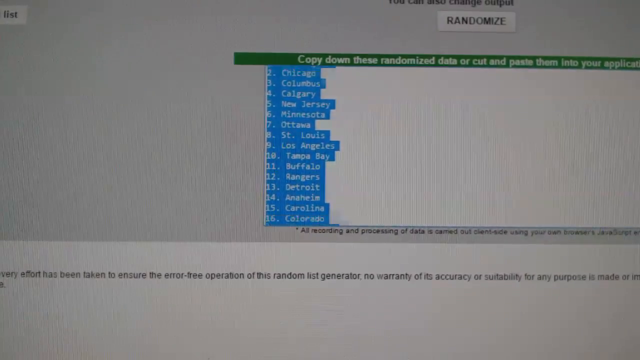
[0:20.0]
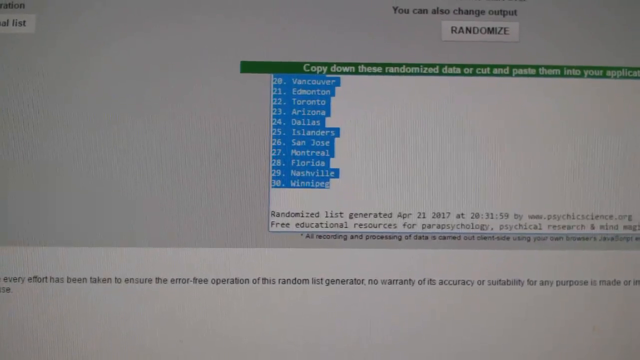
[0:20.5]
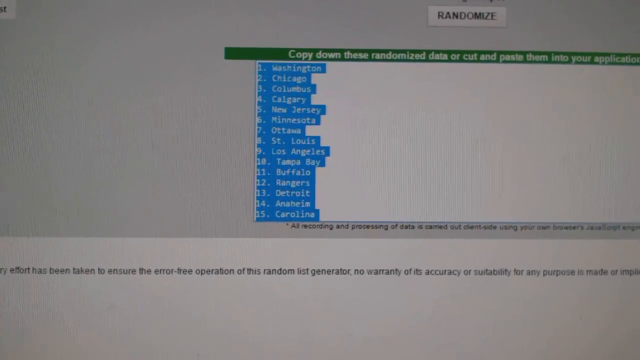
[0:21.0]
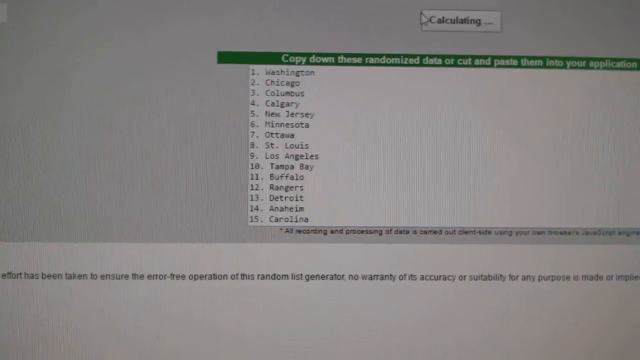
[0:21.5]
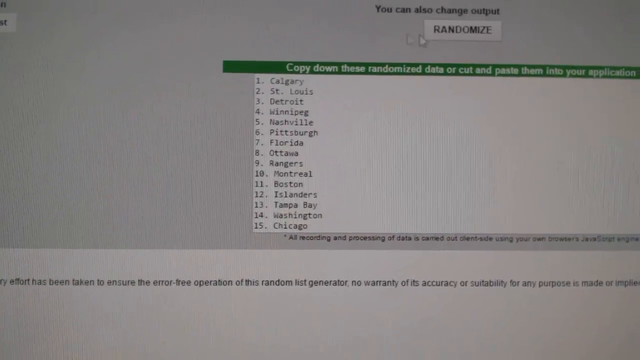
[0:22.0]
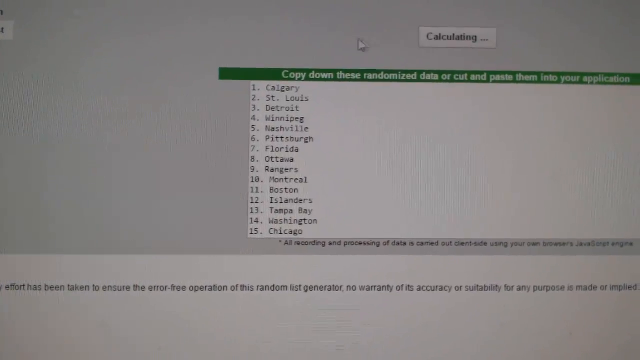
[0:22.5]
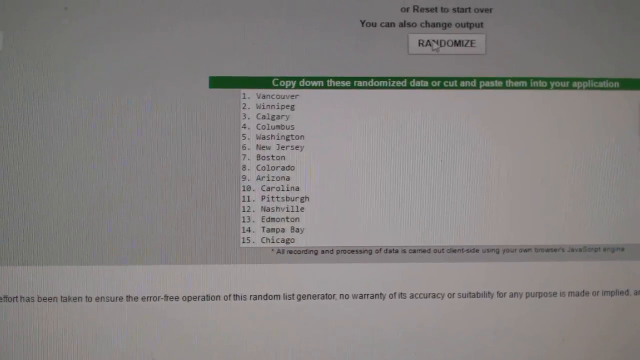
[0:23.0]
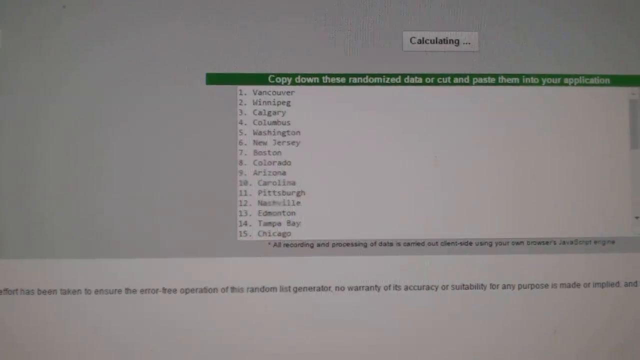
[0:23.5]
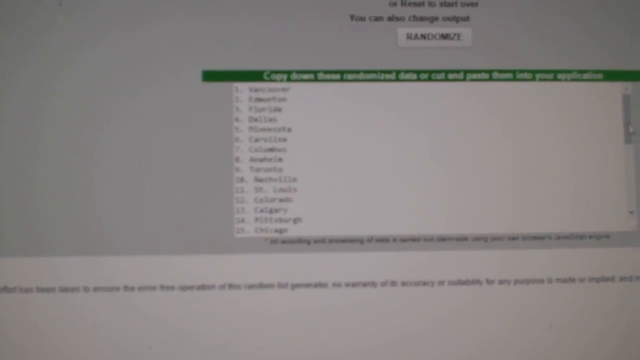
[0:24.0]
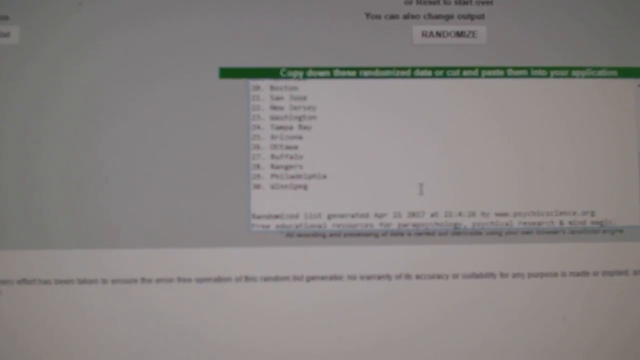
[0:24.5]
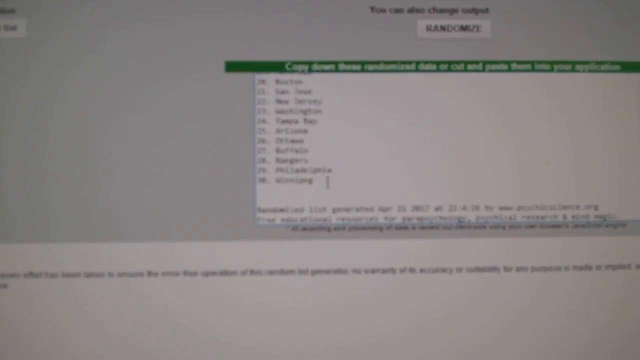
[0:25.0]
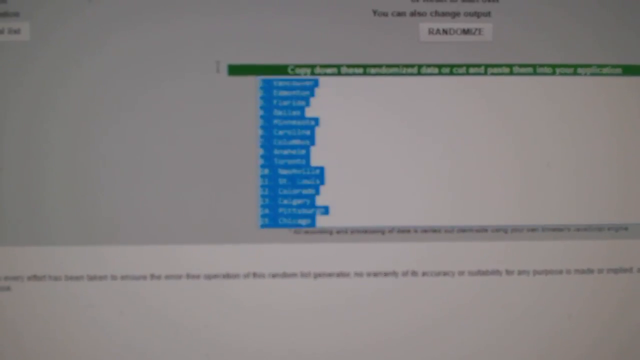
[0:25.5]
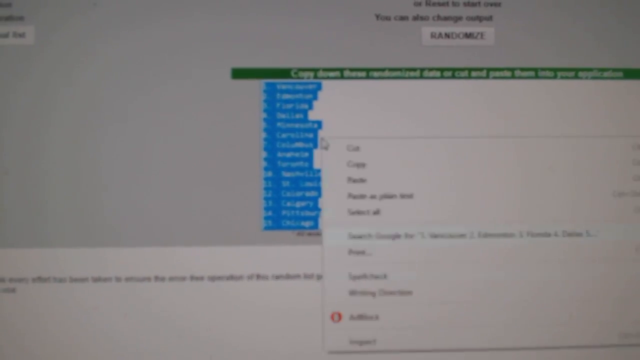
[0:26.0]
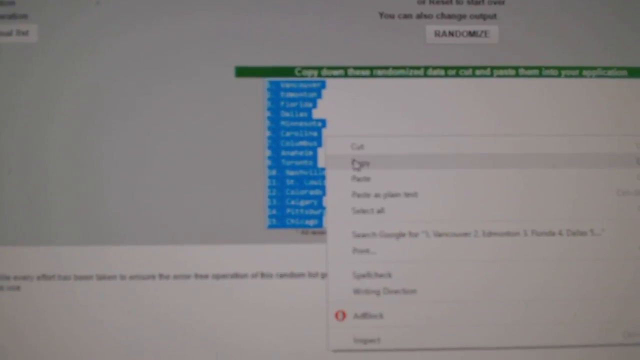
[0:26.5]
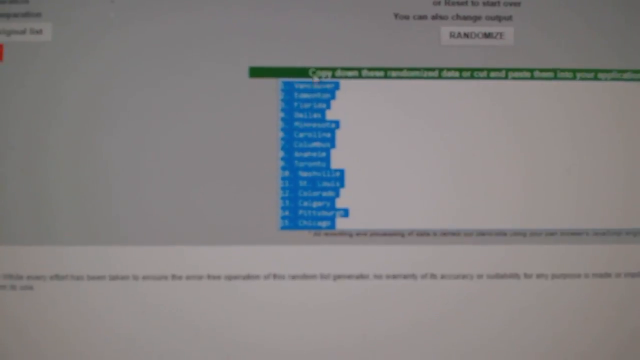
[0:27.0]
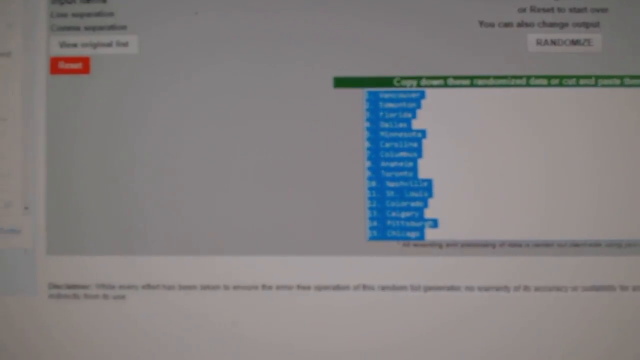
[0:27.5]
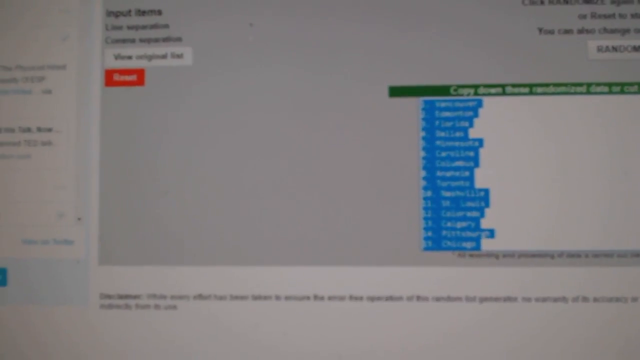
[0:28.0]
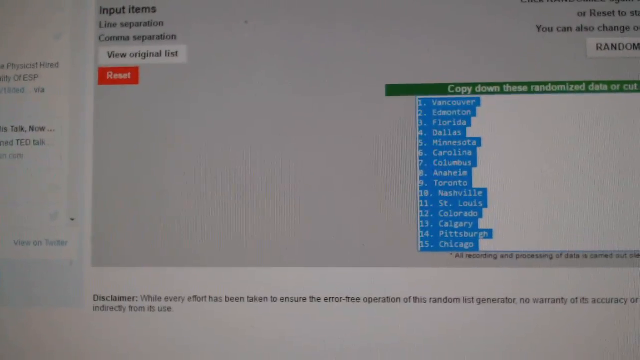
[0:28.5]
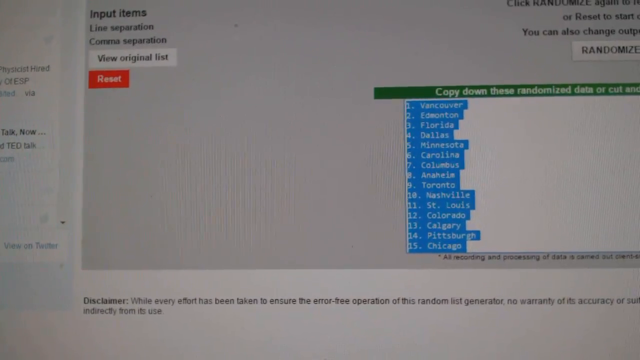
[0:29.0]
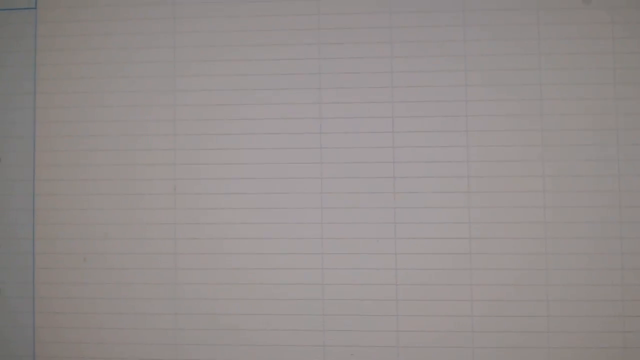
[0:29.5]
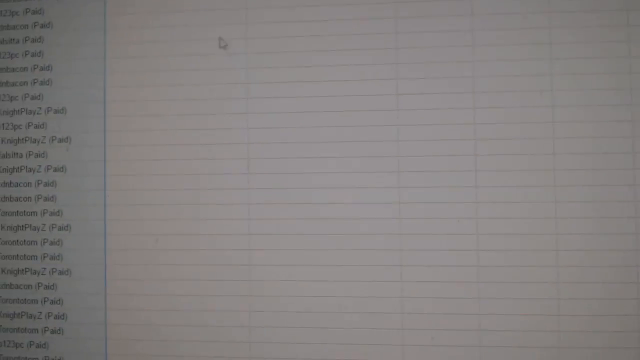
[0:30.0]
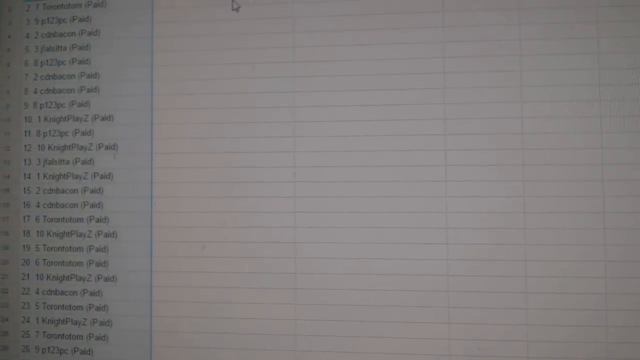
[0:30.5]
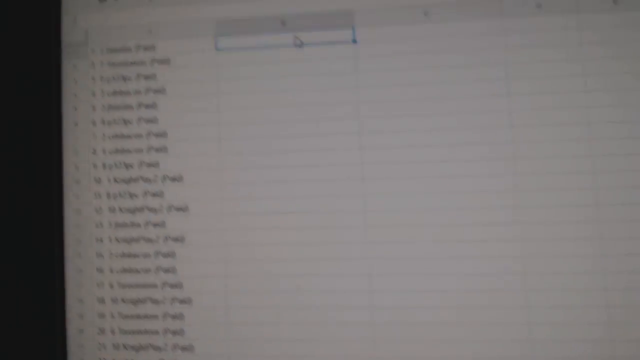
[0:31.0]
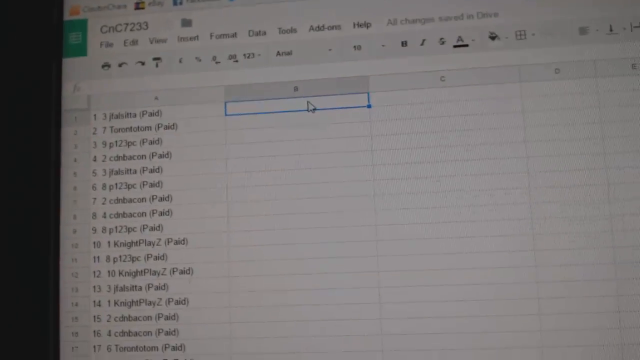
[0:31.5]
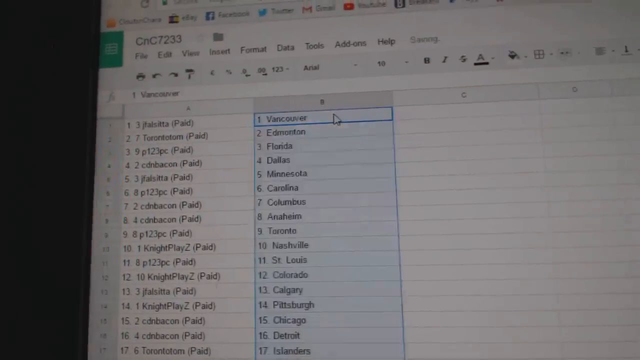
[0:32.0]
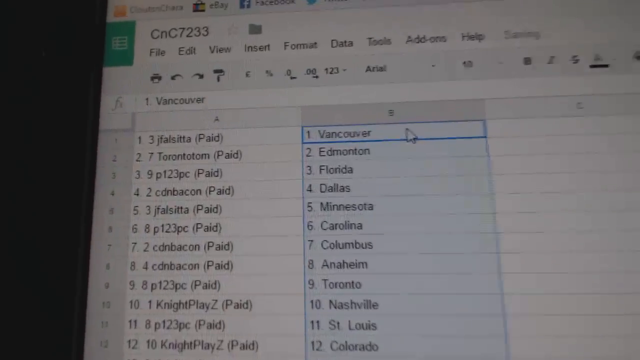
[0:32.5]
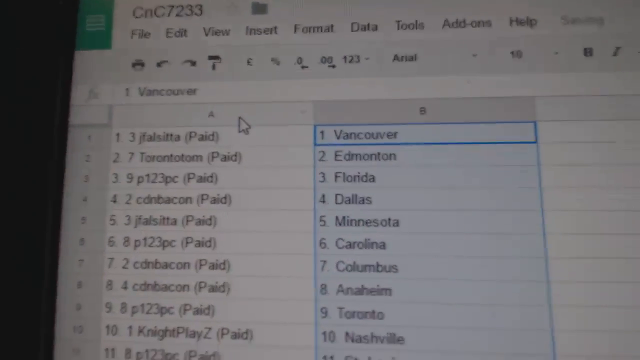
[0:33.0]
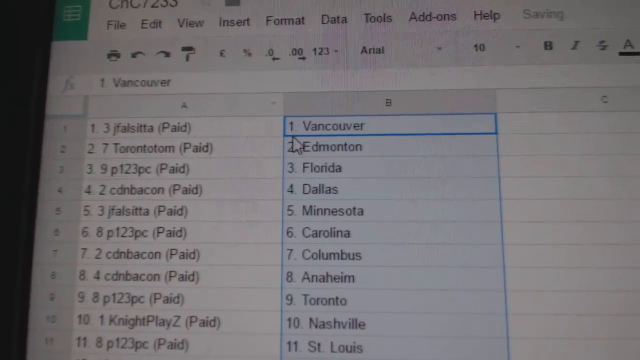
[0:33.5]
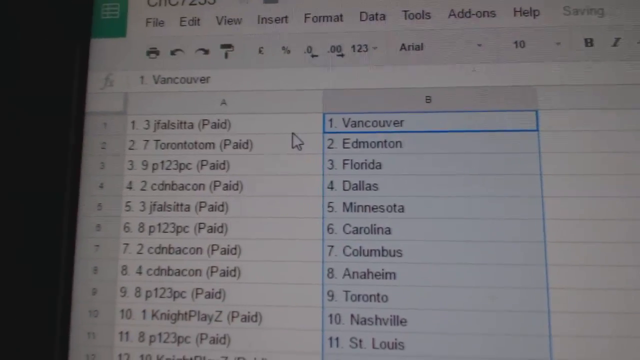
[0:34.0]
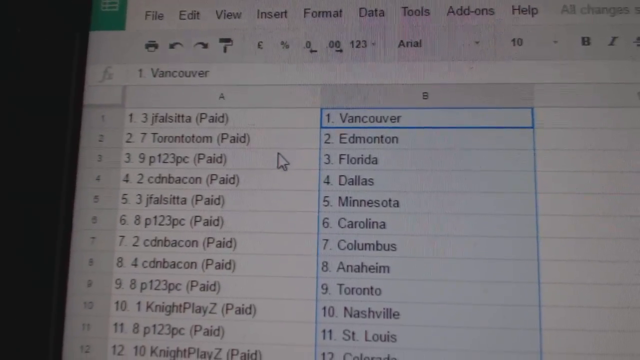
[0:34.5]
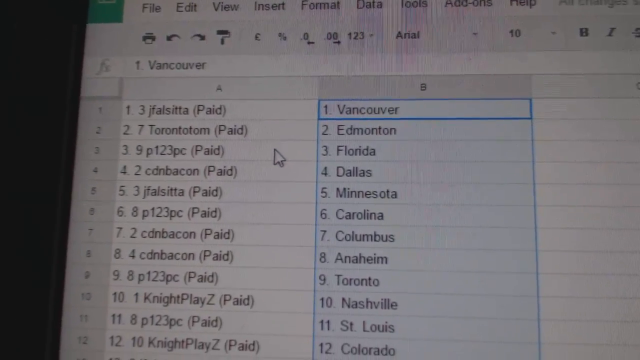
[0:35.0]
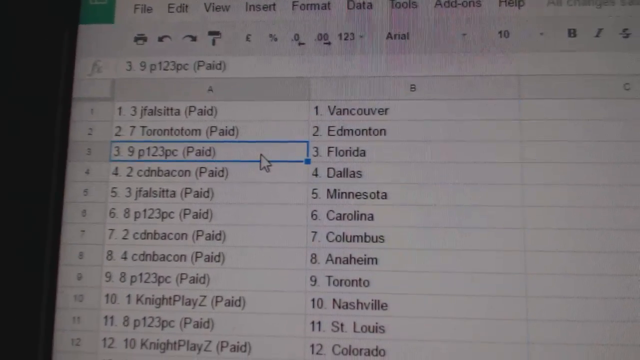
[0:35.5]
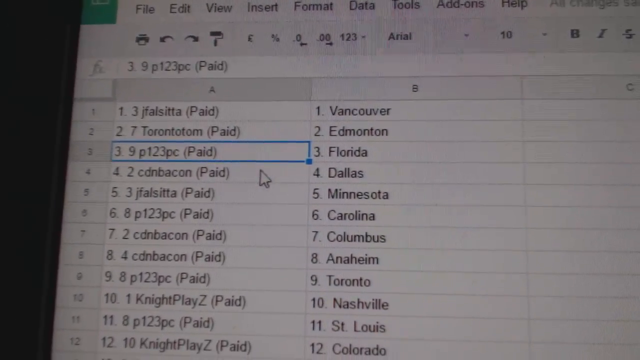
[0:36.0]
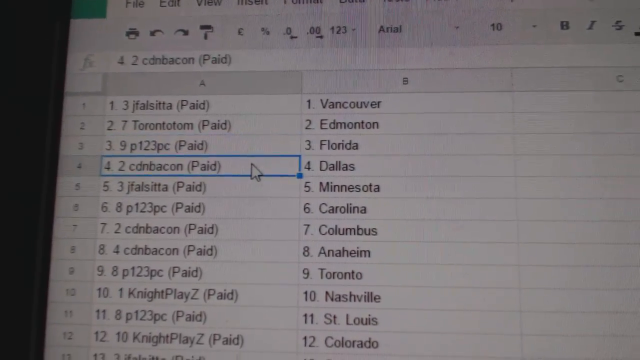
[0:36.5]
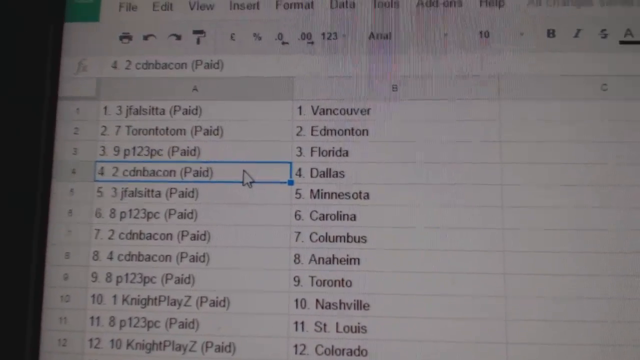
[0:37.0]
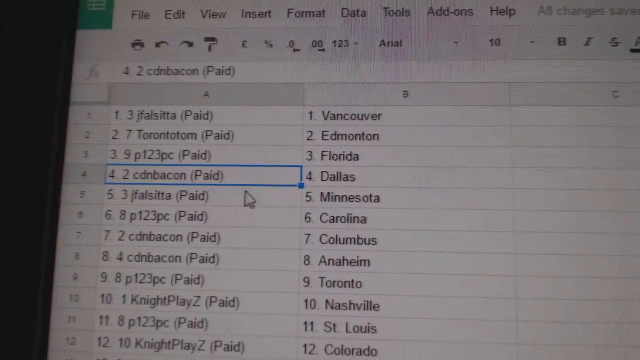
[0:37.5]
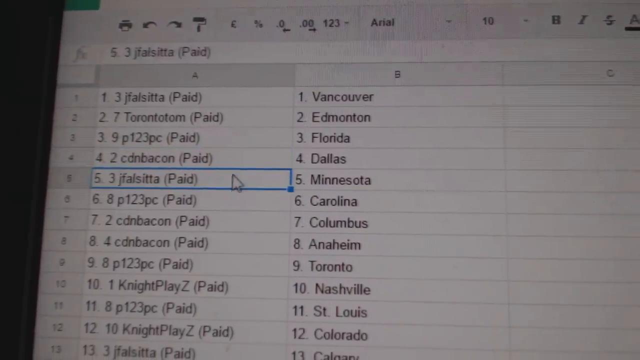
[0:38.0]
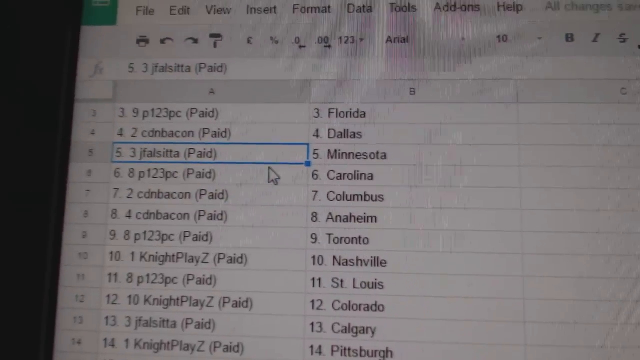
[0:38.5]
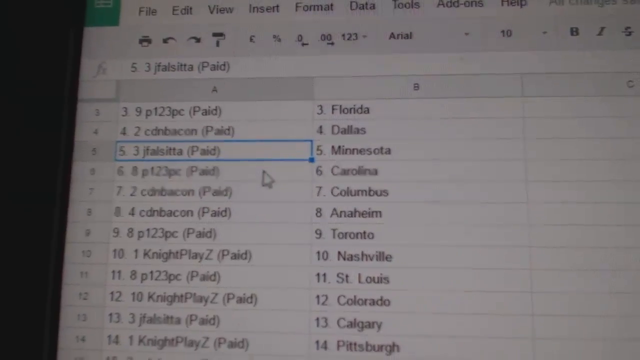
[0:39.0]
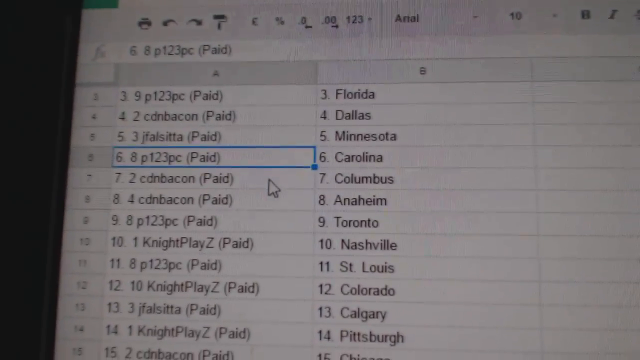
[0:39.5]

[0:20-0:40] He highlights a list reading one Chicago, two Columbus, three Calgary or Columbus, and copies it; when he does, the selection turns blue and the writing becomes white. Below the list, in asterisks, there is text that appears to mention AI and processing of data. The image is blurry and pixelated. He scrolls up for a moment, clicks off the highlighting, and keeps pressing the randomize button above, which calculates. The view zooms in briefly and becomes clear, and he copies another set of lists, this time with Vancouver, Edmonton and Florida. To the left there appear to be different usernames, seemingly of people who bought something, with "paid" next to each username. Column A has all the people who paid, and column B apparently has the teams. He clicks through some of the different cells of usernames.